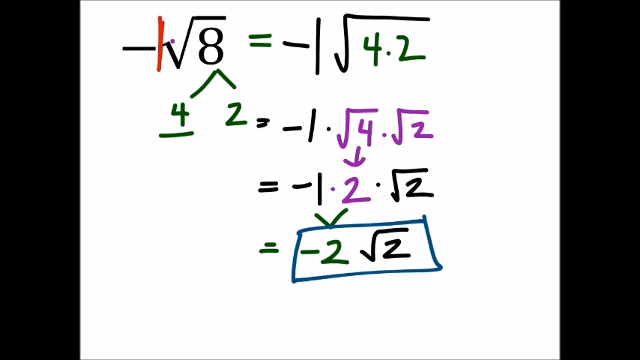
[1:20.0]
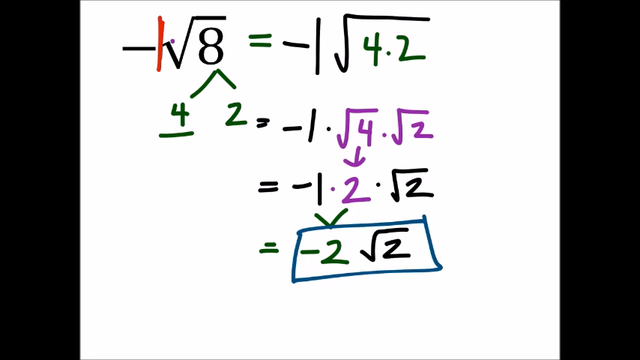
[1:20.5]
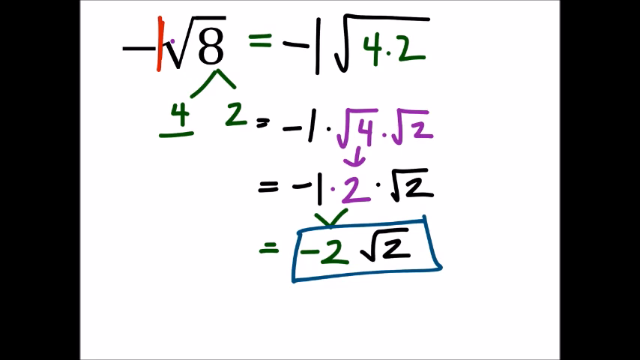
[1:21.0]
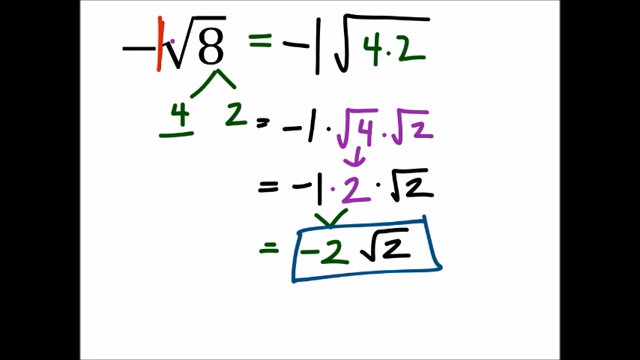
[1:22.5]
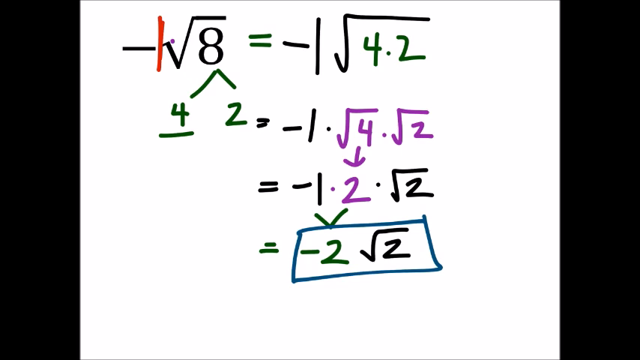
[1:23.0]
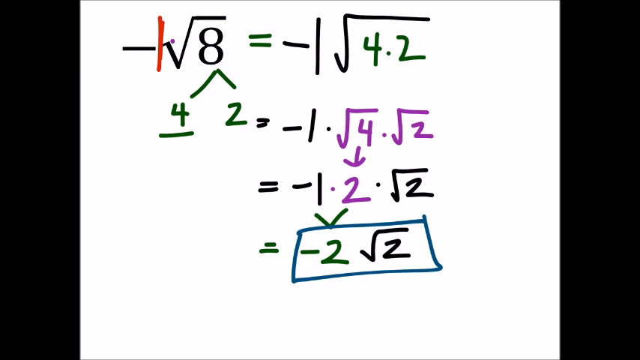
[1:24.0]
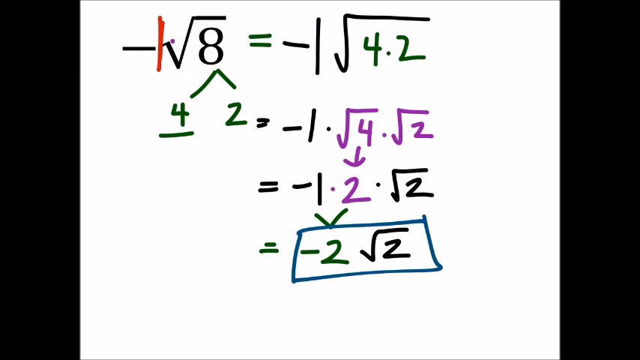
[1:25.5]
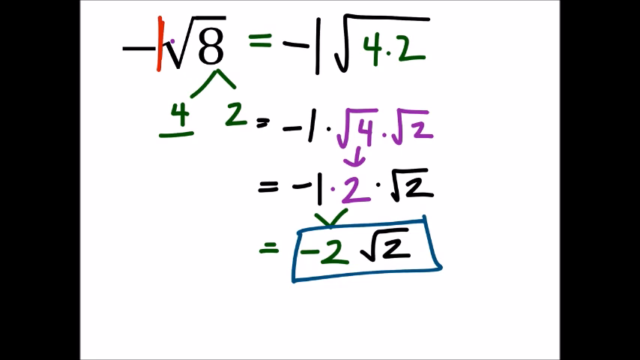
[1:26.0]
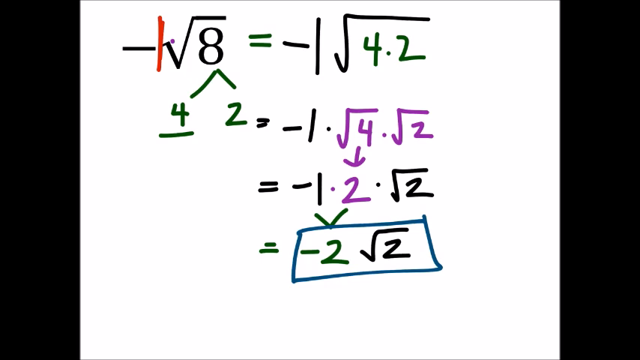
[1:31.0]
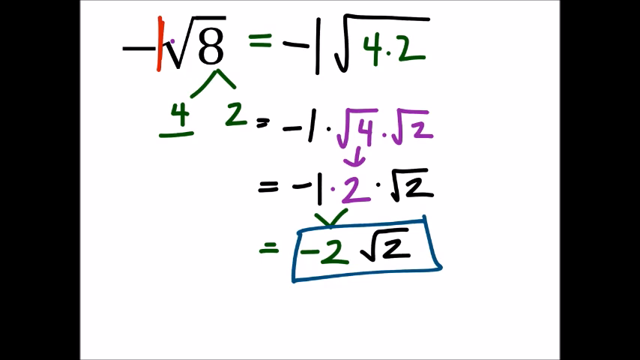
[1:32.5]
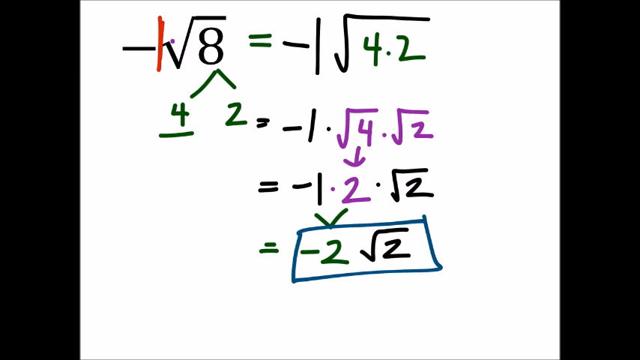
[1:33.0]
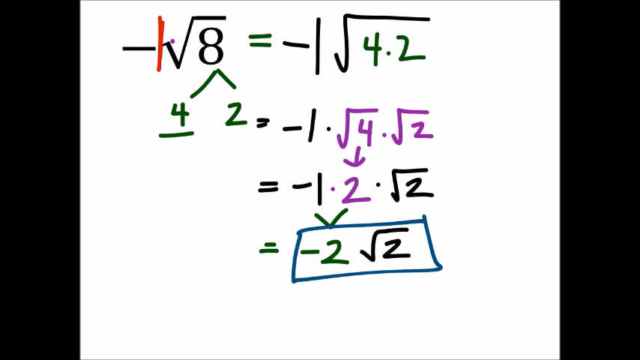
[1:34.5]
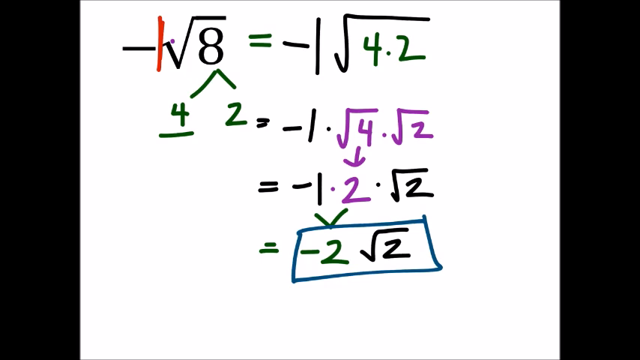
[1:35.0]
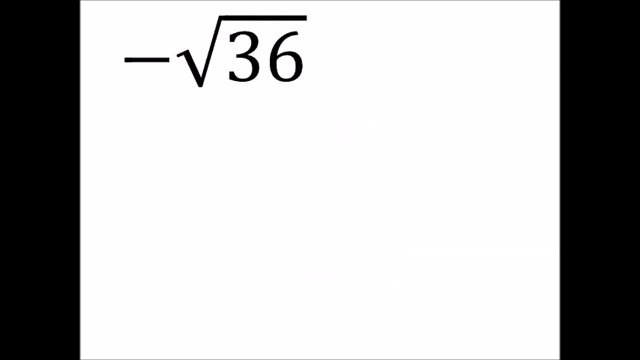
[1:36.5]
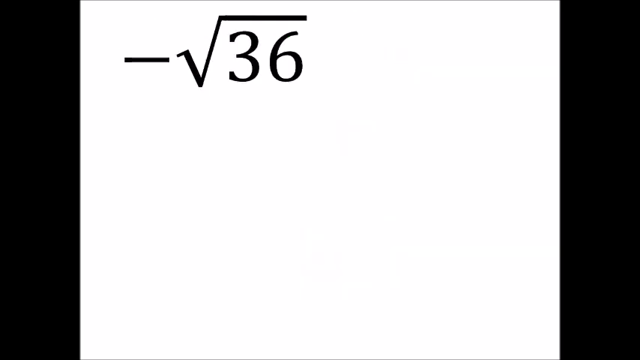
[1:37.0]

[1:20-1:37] The mathematics problem looks very complicated. It reads negative square root of 8 equals negative 1 square root of 4.2. Underneath are two arrows, one pointing to a 4 and the other to a 2; the 4 is underlined. Next to the 2 is an equals sign followed by negative 1 square root of 4 square root of 2, with an arrow underneath the square root of 4. Another equals sign is followed by negative 1 2 square root of 2. Two lines link, one by the negative 1 and the other by the 2. Under that is another equals sign and negative 2 square root of 2, which has a square written around it, possibly marking the answer. After that, everything disappears and "square root of 36 negative" appears, possibly the answer to the sum.